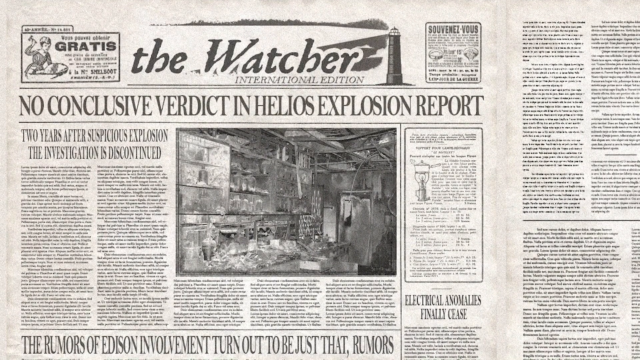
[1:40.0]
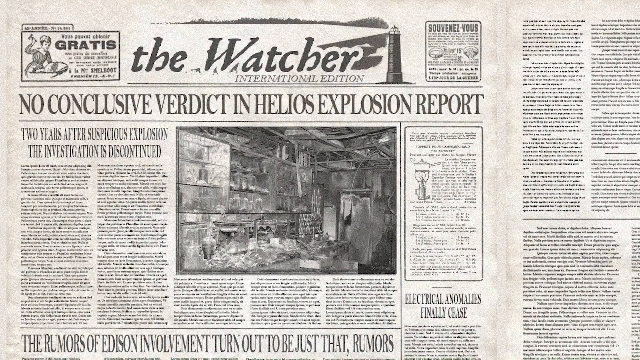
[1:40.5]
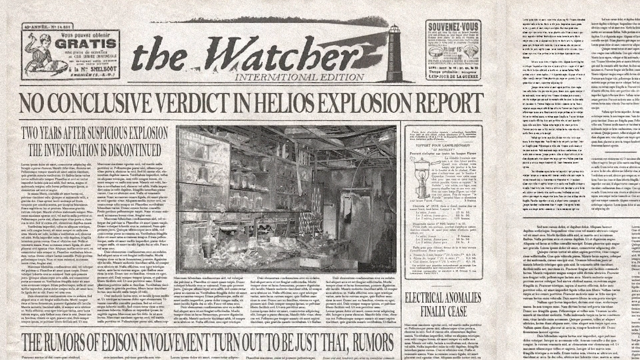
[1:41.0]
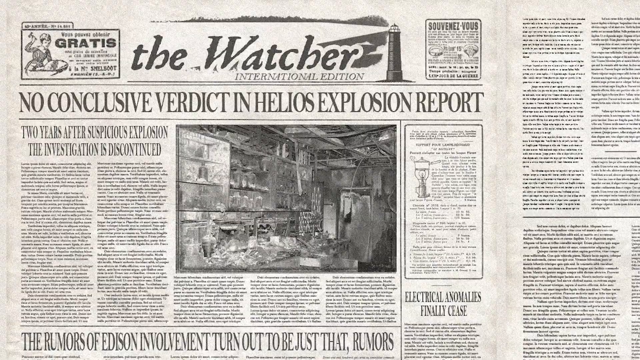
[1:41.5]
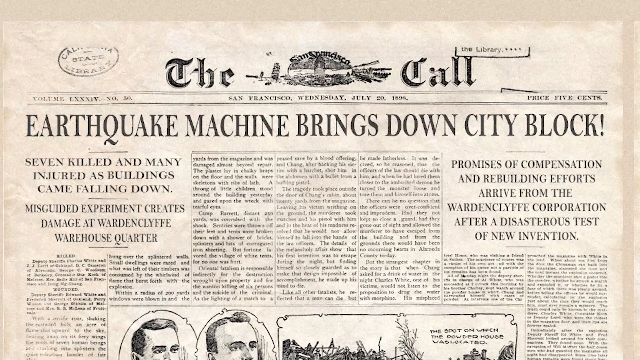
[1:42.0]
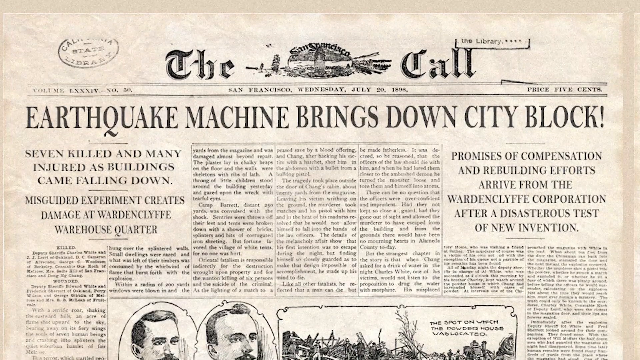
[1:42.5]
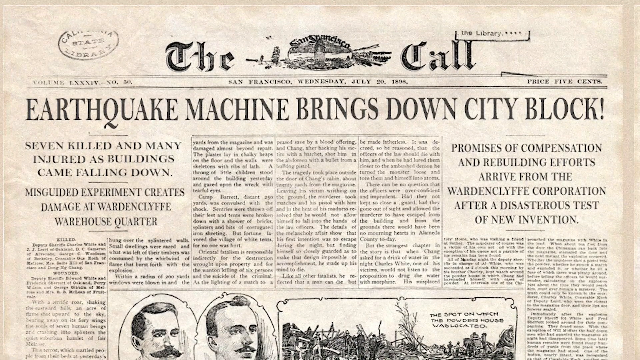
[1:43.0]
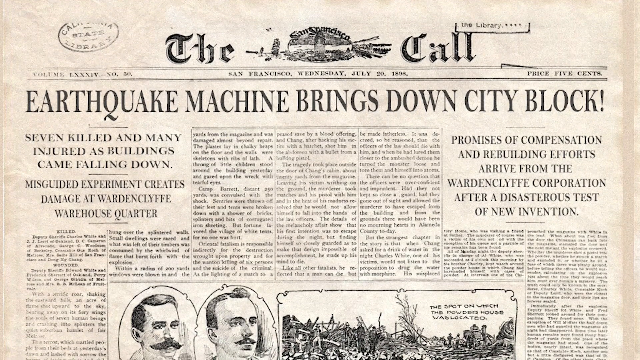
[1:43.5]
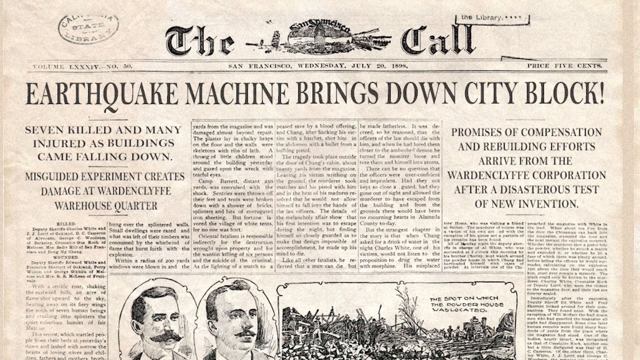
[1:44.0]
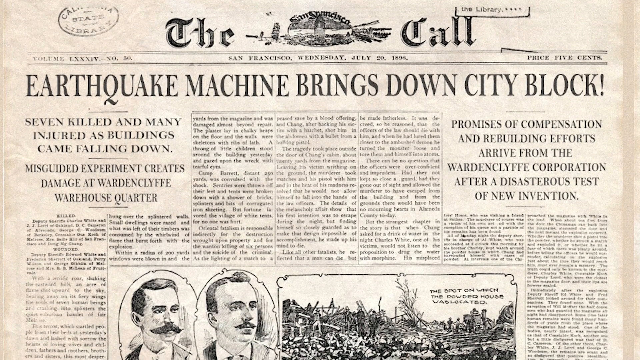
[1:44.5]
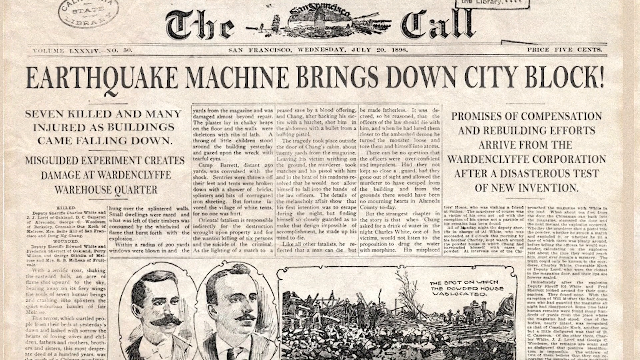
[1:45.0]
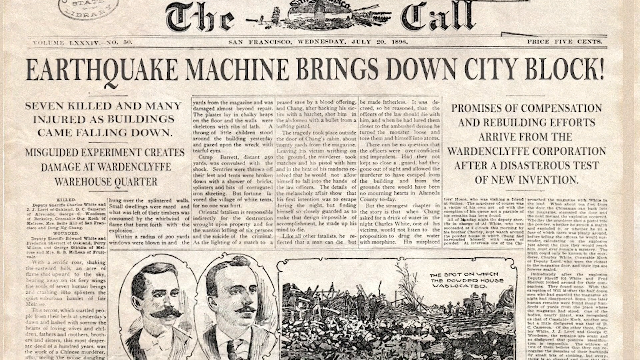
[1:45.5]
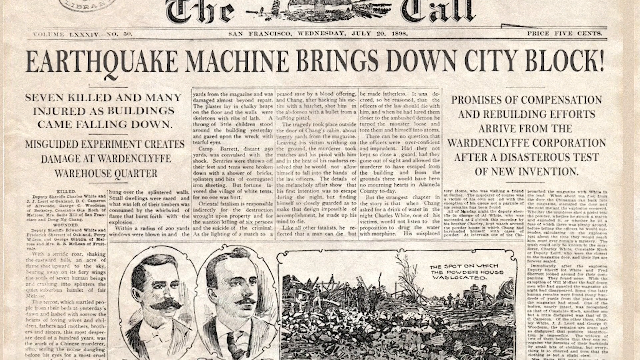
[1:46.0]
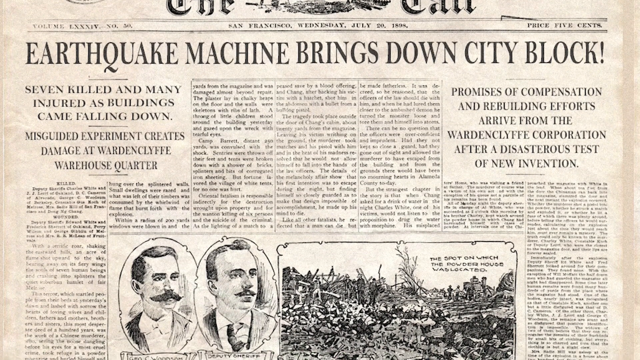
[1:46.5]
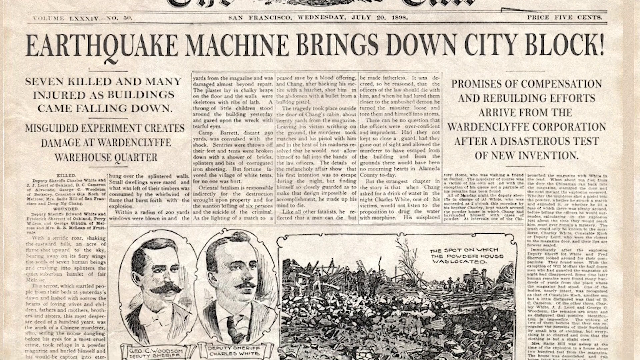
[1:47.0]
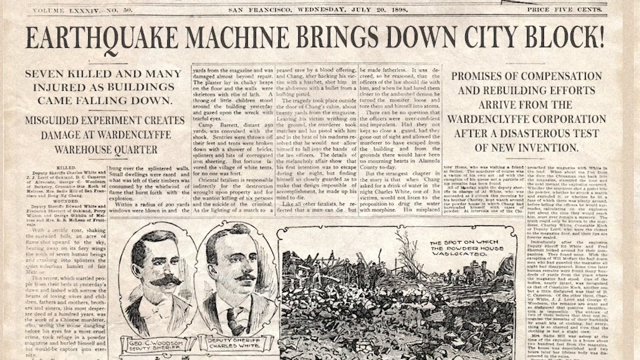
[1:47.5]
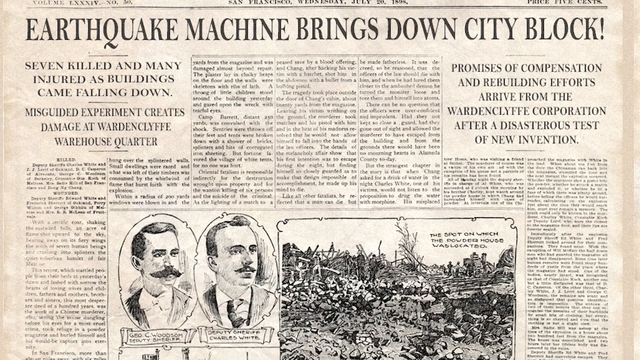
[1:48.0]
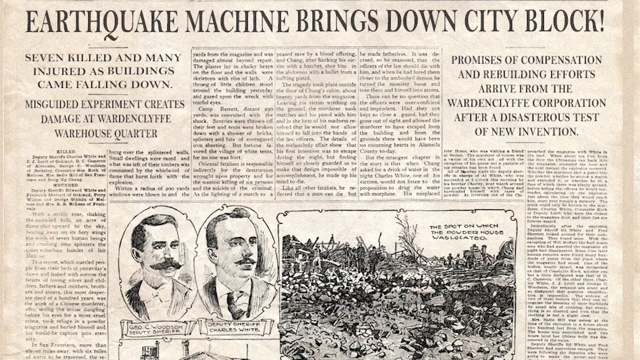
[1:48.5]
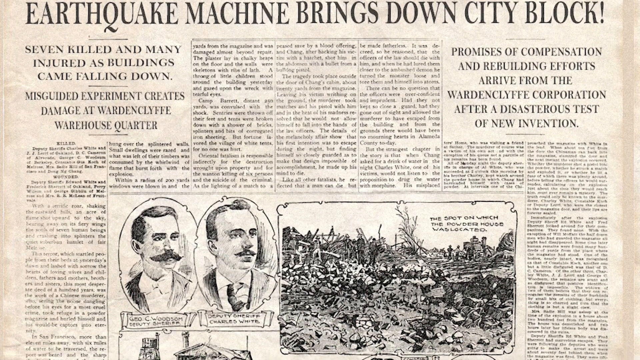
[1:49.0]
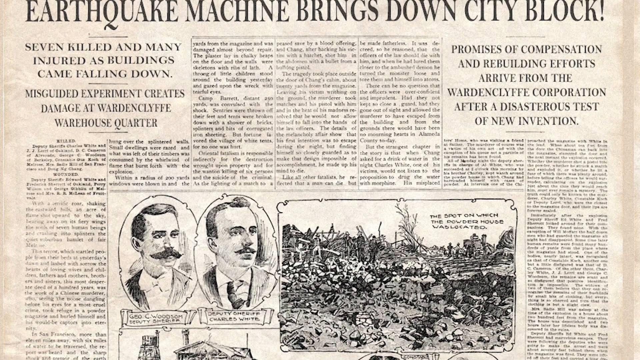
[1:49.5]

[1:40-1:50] What looks like a newspaper clipping is shown in a zoomed-out view. It is from "The Watcher" and reads "no conclusive verdict in Heloise Explosion Report" and "Two years after suspicious explosion, the investigation is discontinued." There is a lot of text too small to read and a slightly blurry picture. The view switches to a different newspaper that reads "Earthquake Machine Brings Down City Block," "Promises of Compensation and Rebuilding Efforts Arrive from the Warden Clife Corporation After Disastrous Test of New Invention," "Seven Killed and Many Injured as Buildings Come Falling Down," and "Misguided Experiment Creates Damage at" a quarter. The view kind of scrolls down the newspaper, which looks to be older, showing a picture of two men with a circle around them and maybe a graphic cartoon next to them, with text reading "the spot on which the" ... house "was located."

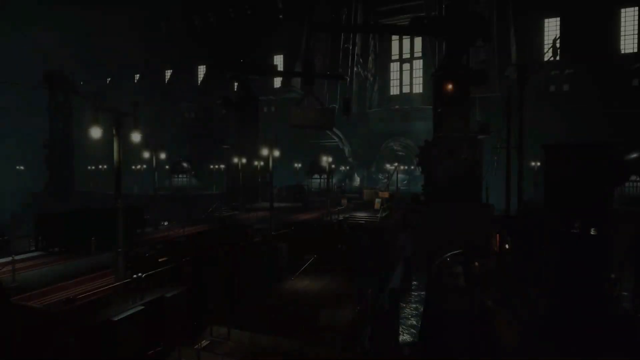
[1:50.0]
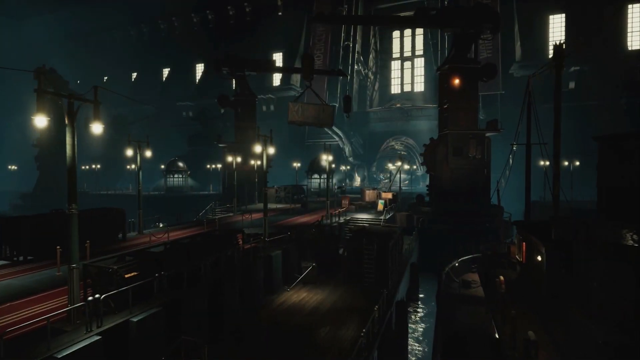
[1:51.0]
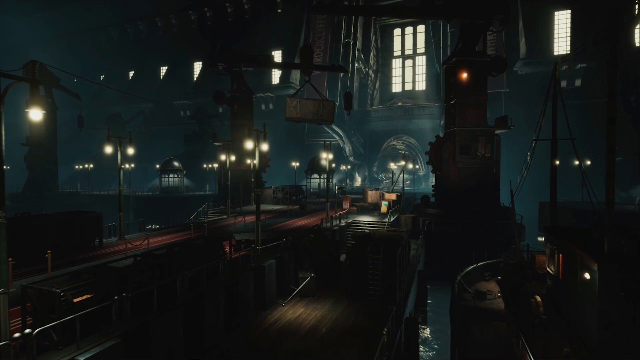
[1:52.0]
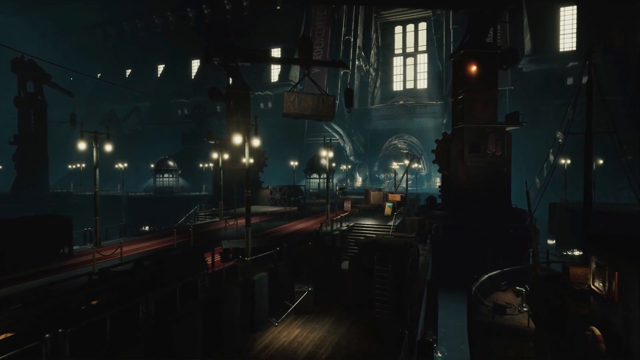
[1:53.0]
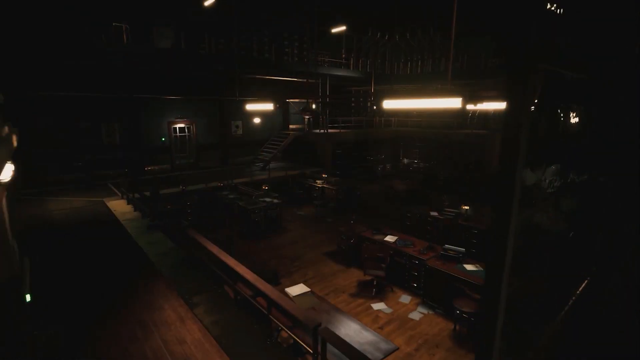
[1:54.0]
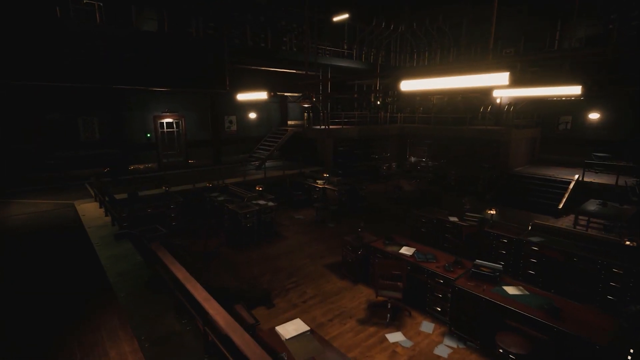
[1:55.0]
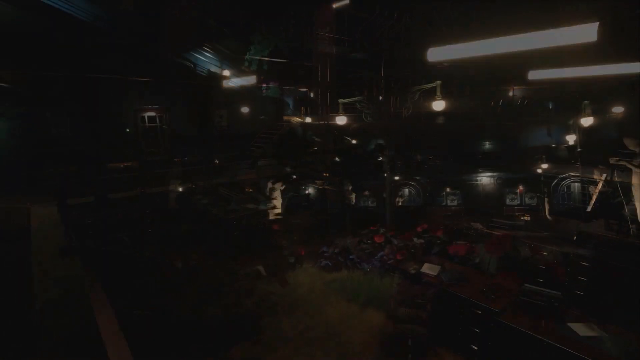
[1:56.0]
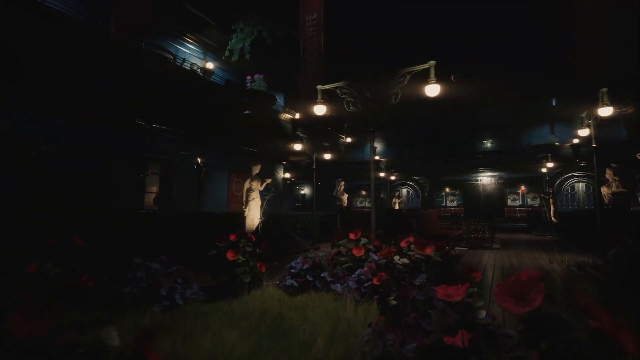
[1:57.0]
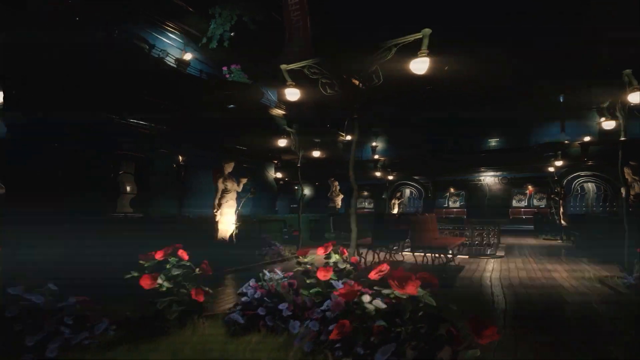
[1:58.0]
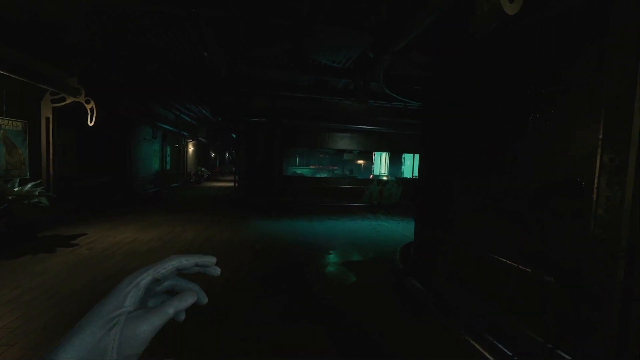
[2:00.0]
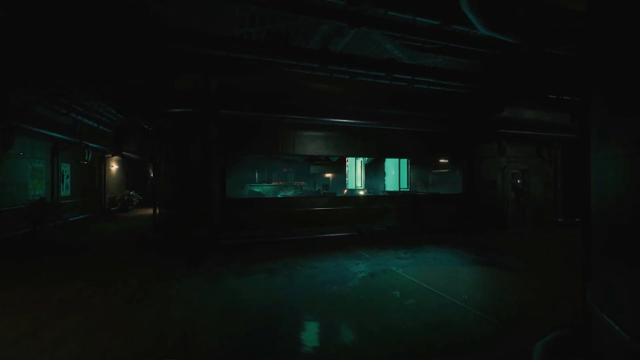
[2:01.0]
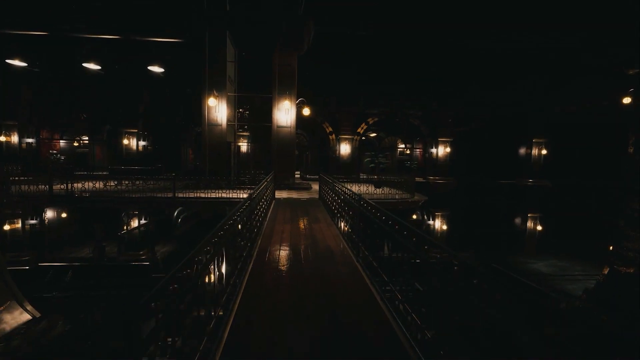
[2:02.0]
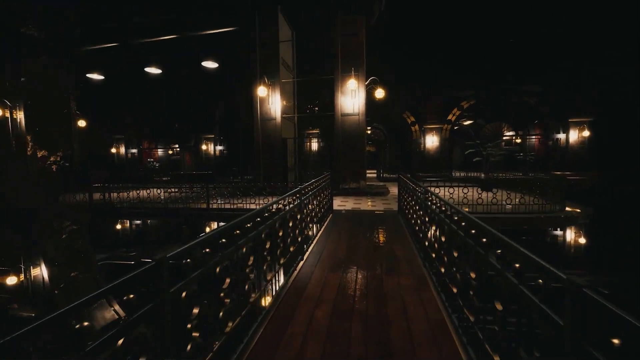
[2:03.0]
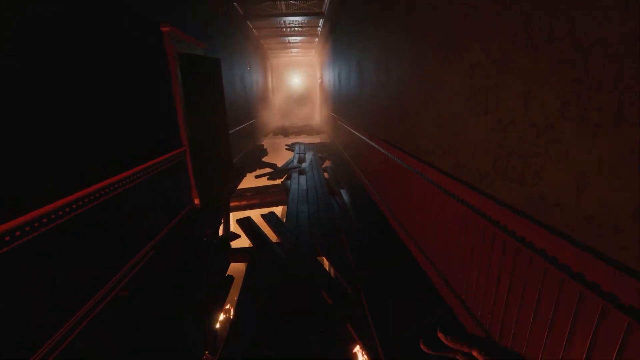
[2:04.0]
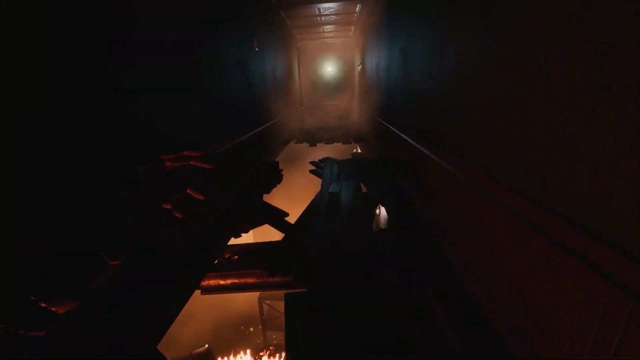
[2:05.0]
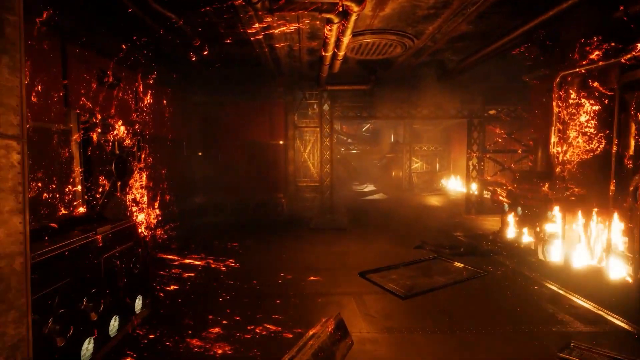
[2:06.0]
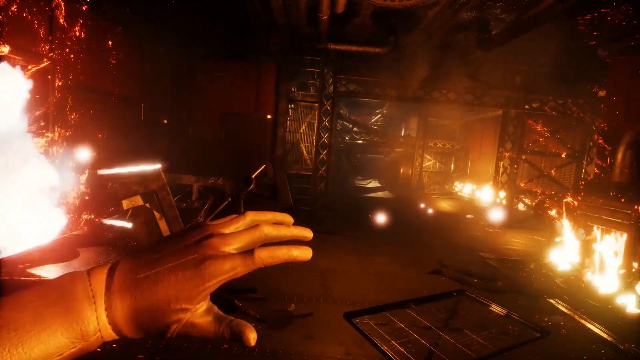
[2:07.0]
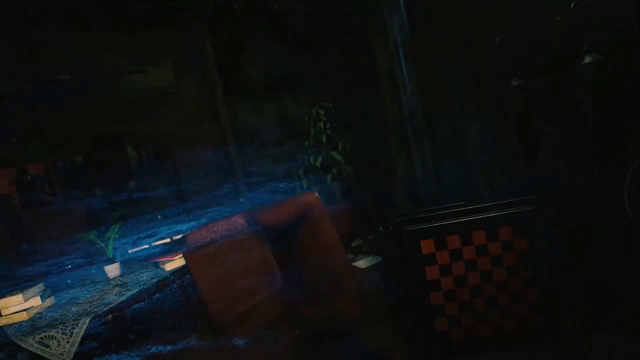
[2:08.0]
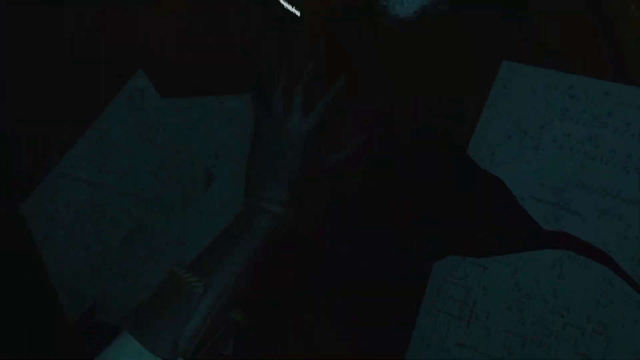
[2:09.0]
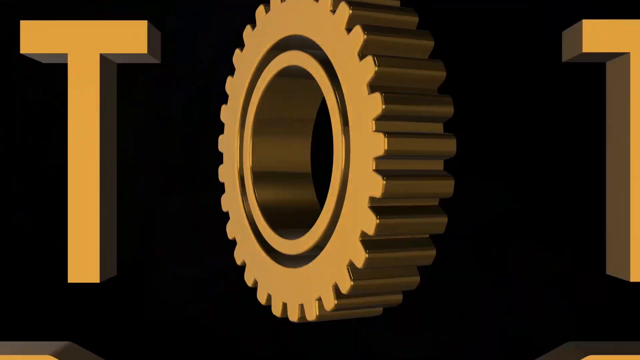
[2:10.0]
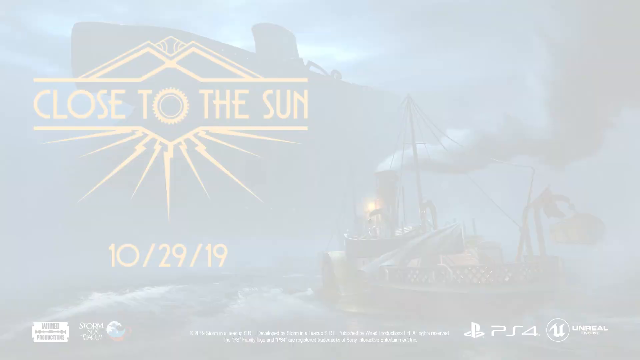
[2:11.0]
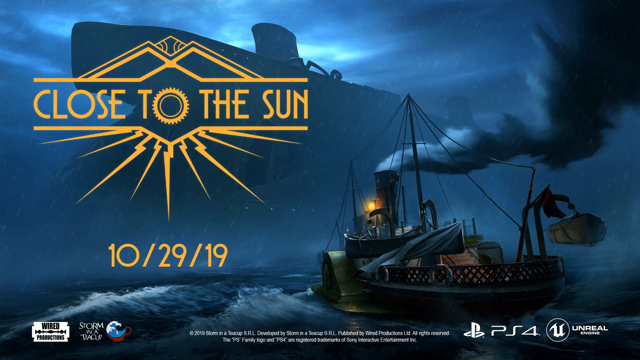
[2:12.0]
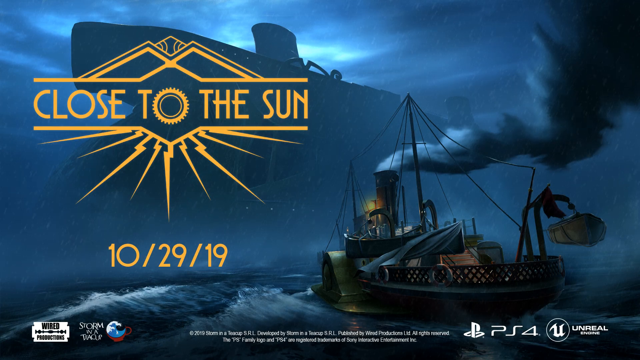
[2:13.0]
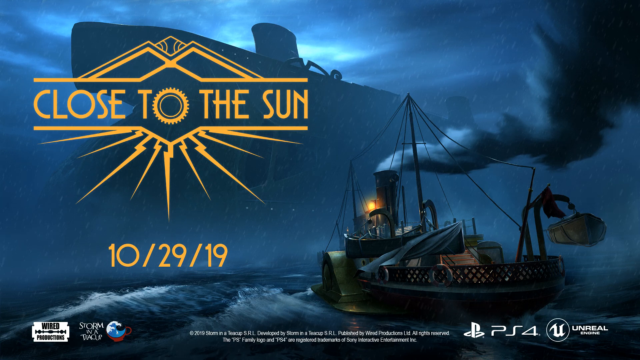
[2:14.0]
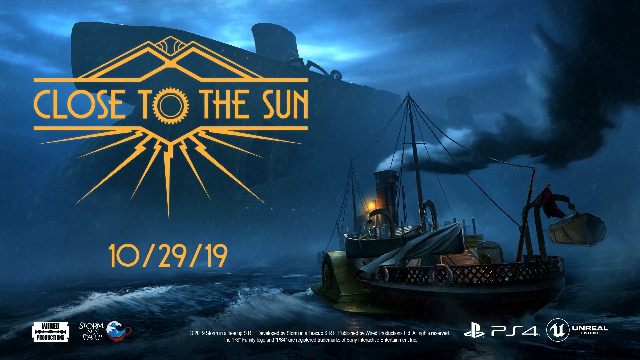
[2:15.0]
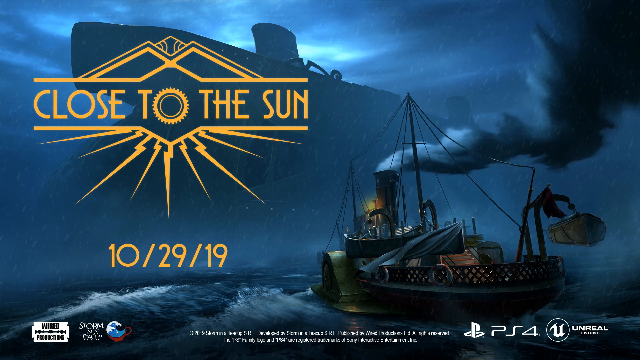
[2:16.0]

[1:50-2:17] The scene appears to be inside a building that is dark despite a bunch of windows, maybe evening. There appear to be individual stations, each with a pole and a light coming down on either side. The camera moves toward a room and goes inside, where there are statues like those found in ancient Greece and what looks like some flowers, but the rooms are so dark and the footage is a little blurry, so it is hard to make out. A crackling effect like in old movies appears. The view then seems to switch to a first-person scene walking through the room, showing different scenes, such as a burning building. It then shows "Close to the Sun" and "10 29 19", and ends there.